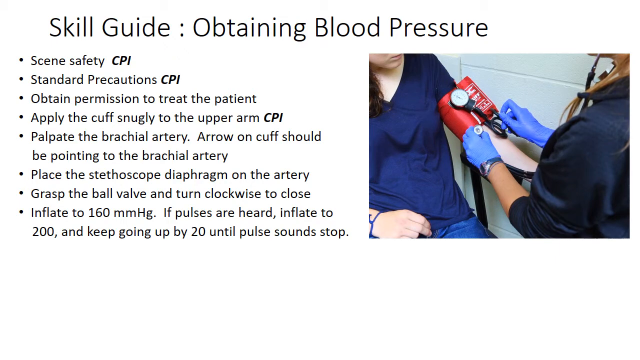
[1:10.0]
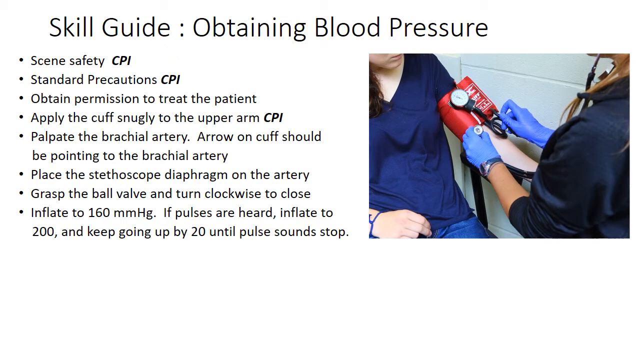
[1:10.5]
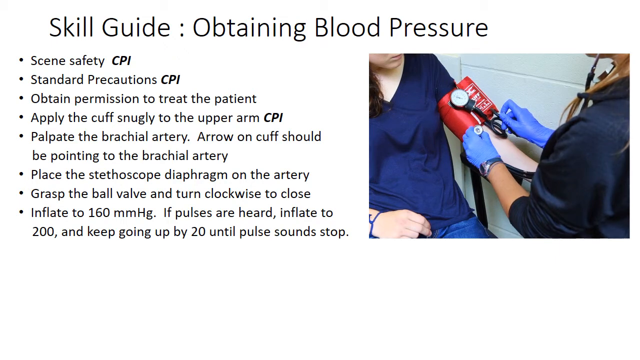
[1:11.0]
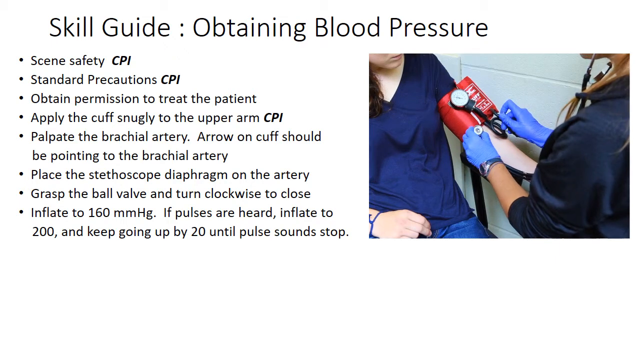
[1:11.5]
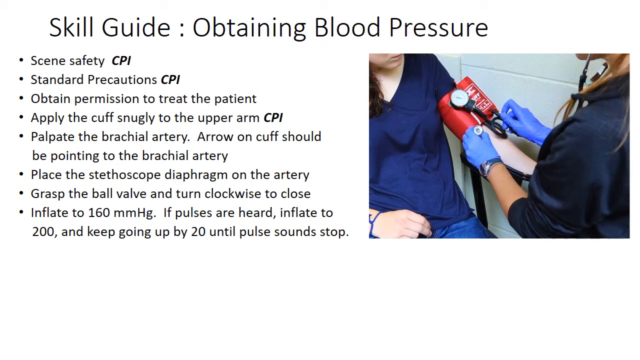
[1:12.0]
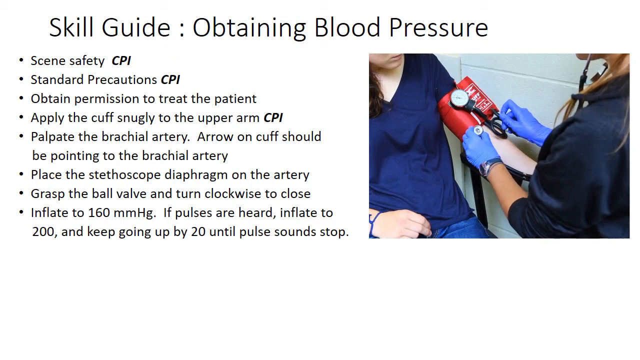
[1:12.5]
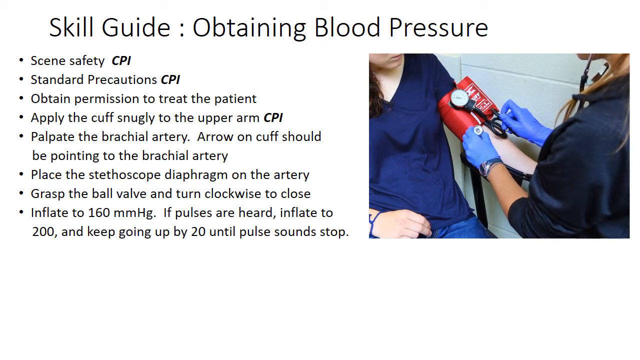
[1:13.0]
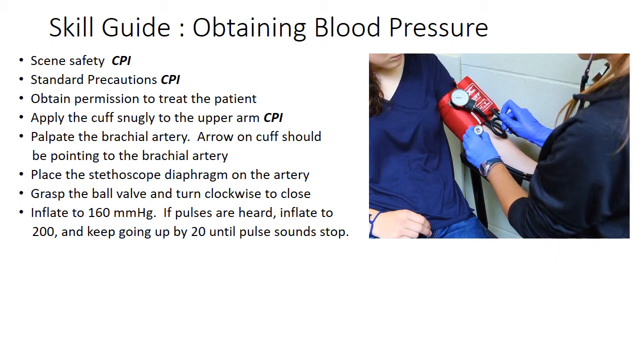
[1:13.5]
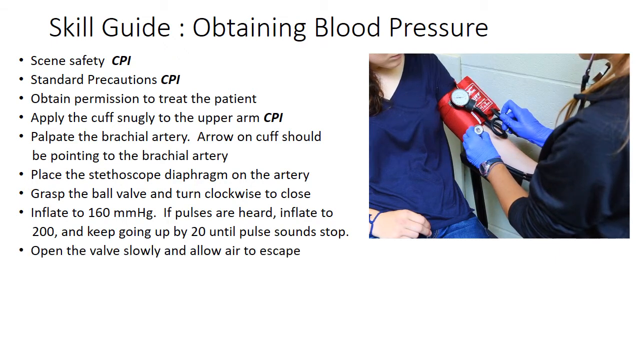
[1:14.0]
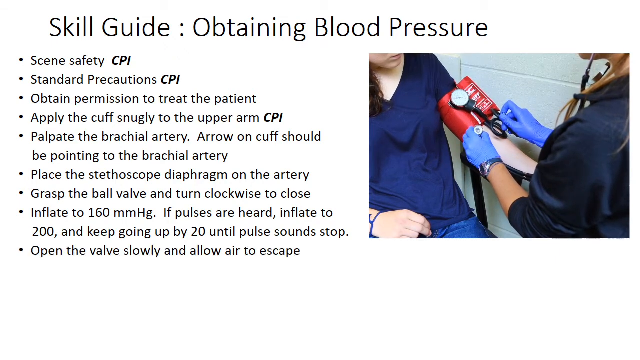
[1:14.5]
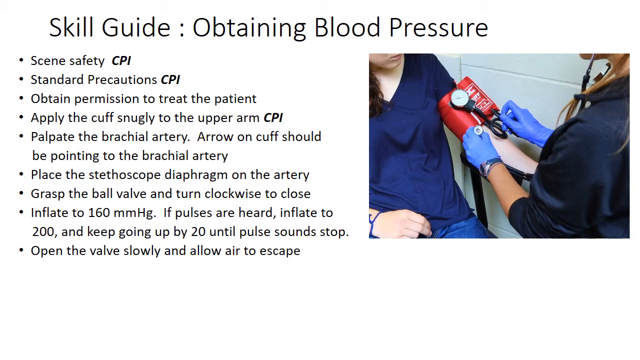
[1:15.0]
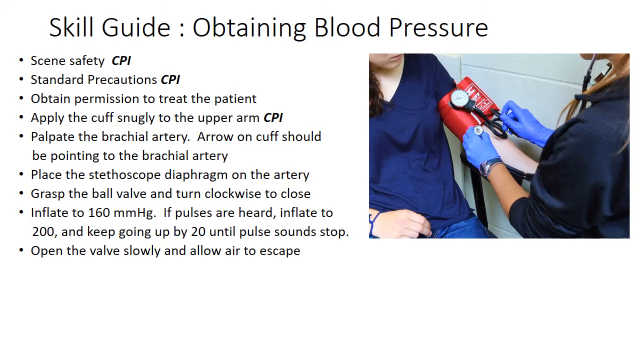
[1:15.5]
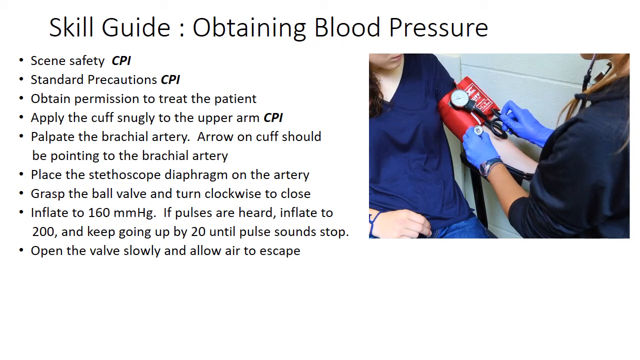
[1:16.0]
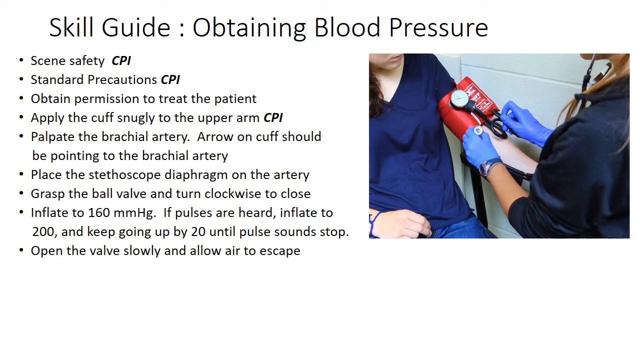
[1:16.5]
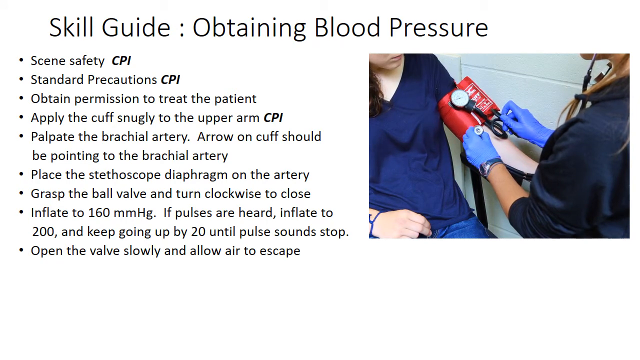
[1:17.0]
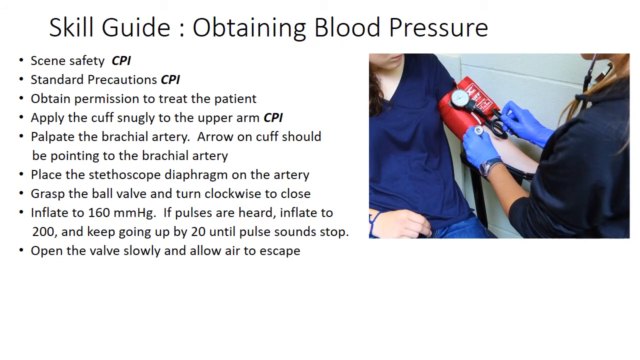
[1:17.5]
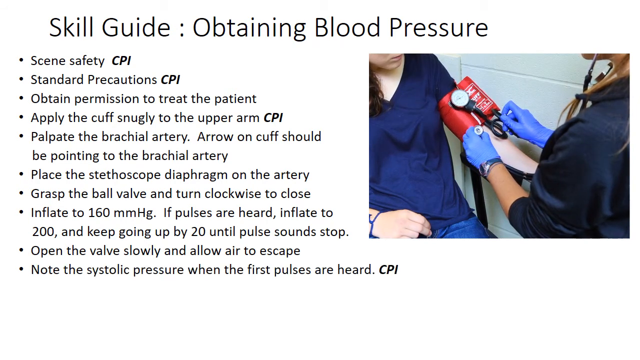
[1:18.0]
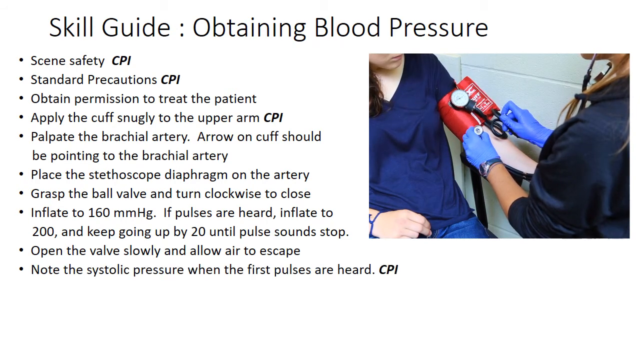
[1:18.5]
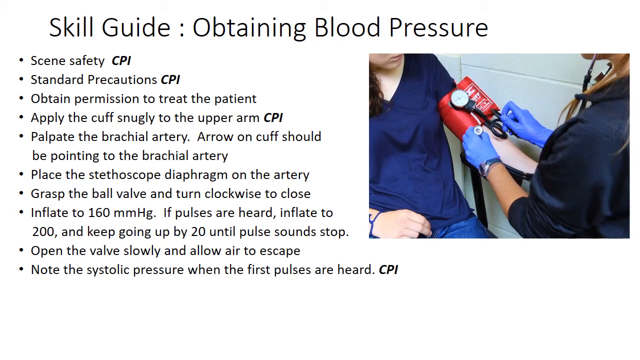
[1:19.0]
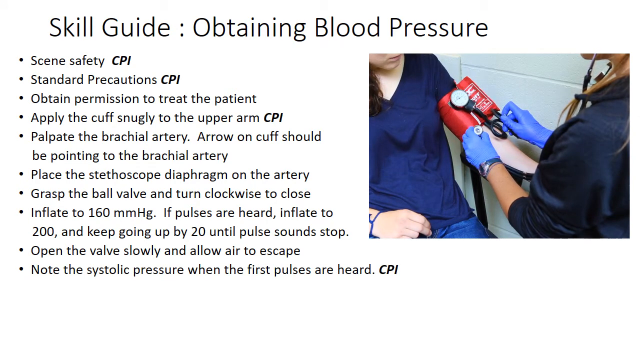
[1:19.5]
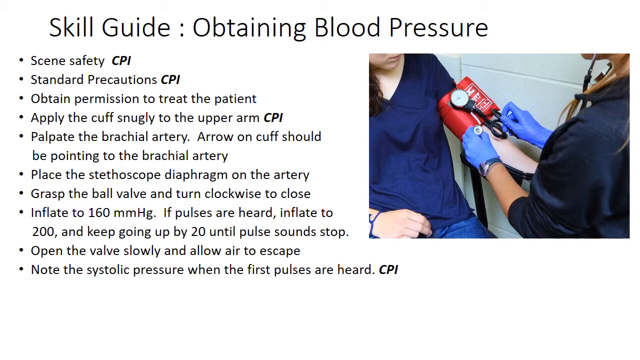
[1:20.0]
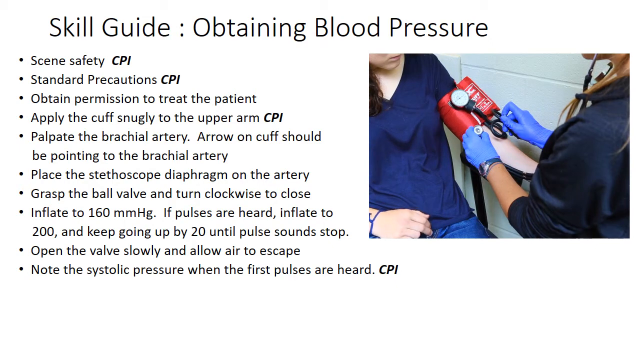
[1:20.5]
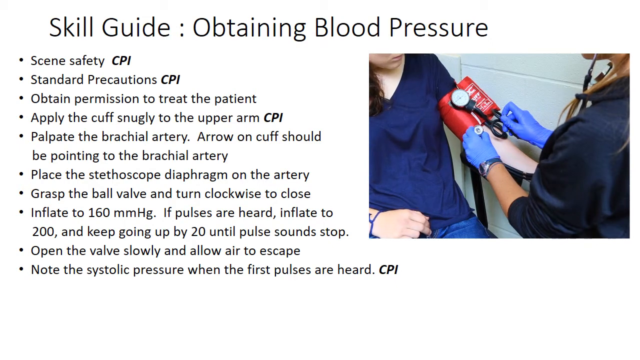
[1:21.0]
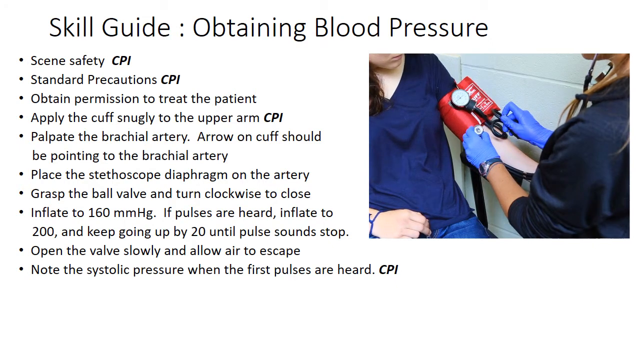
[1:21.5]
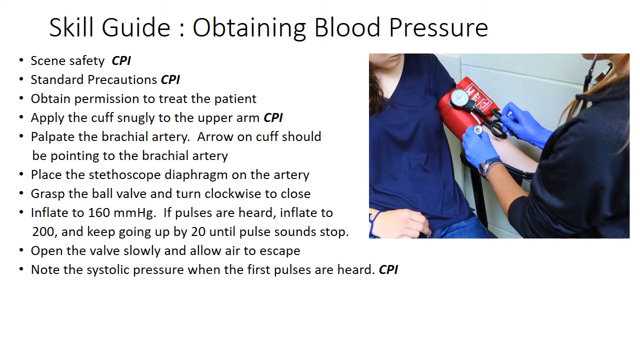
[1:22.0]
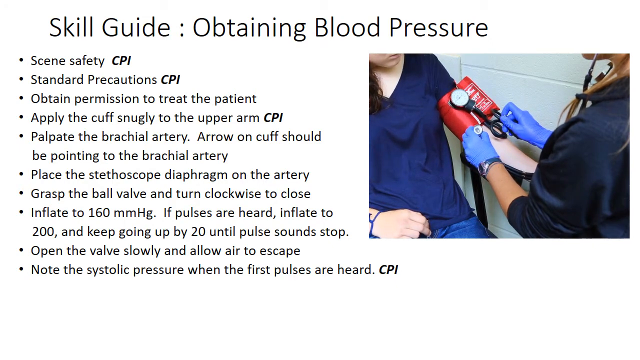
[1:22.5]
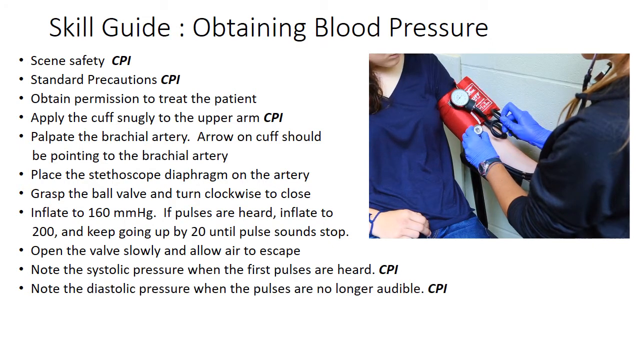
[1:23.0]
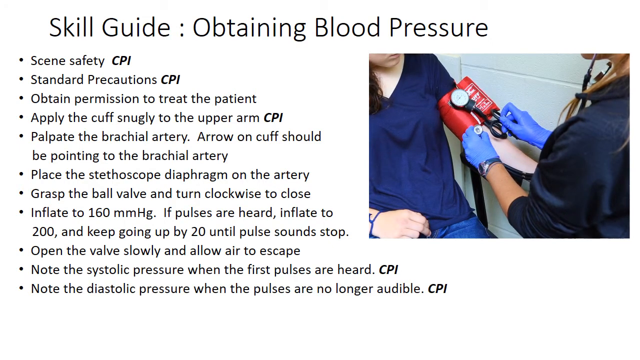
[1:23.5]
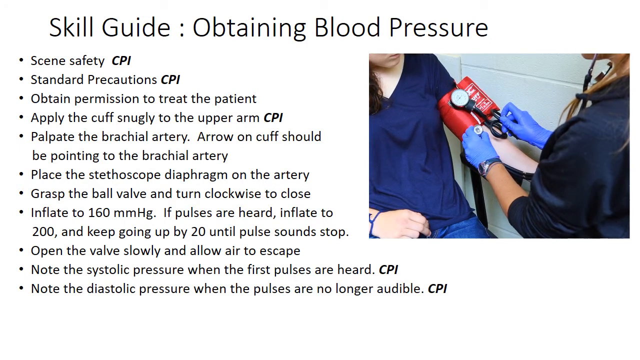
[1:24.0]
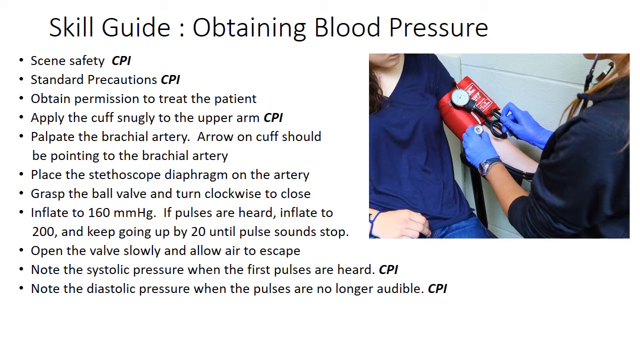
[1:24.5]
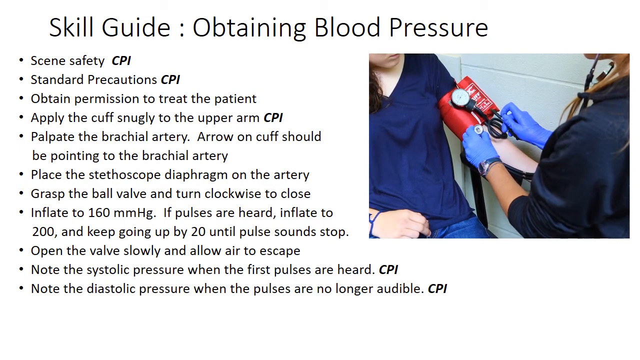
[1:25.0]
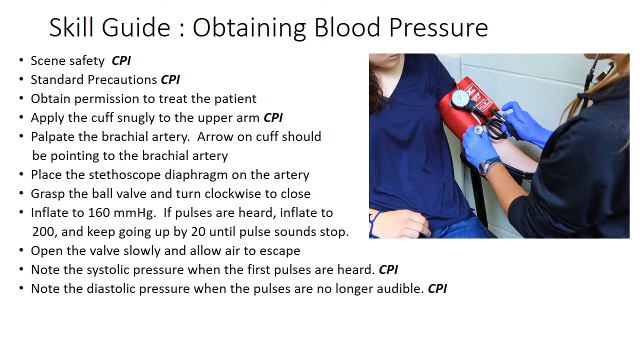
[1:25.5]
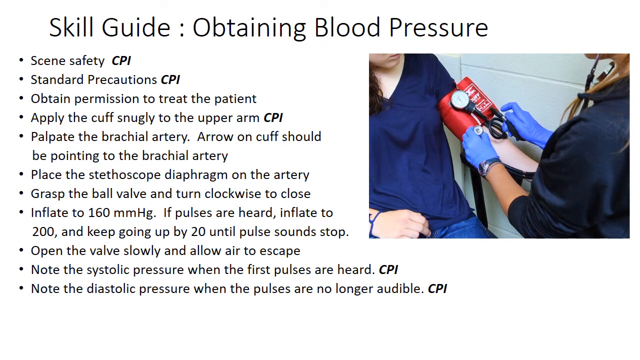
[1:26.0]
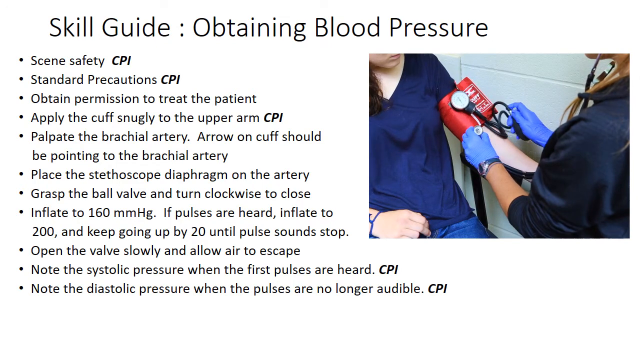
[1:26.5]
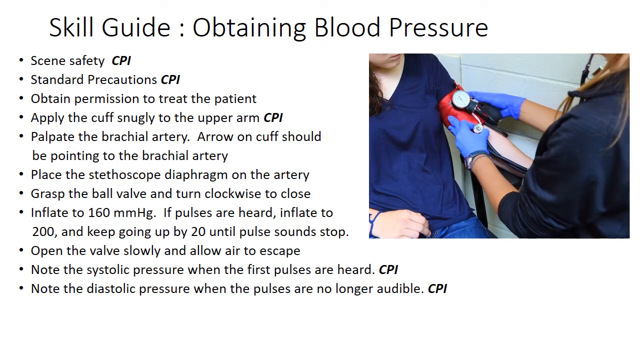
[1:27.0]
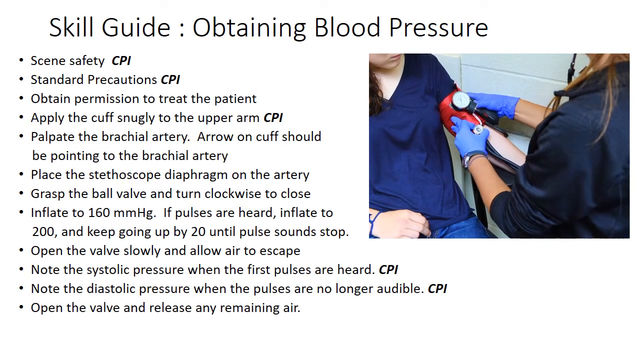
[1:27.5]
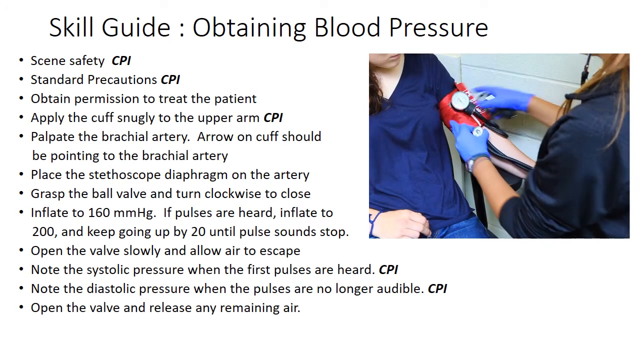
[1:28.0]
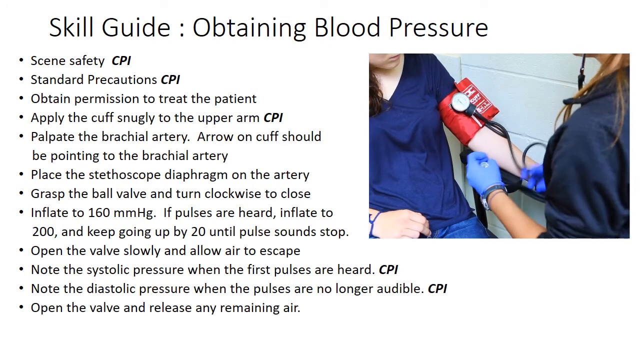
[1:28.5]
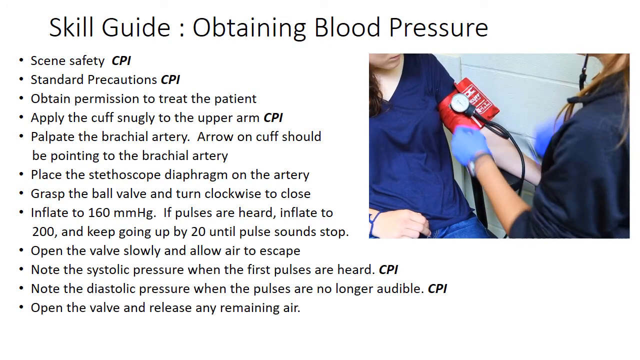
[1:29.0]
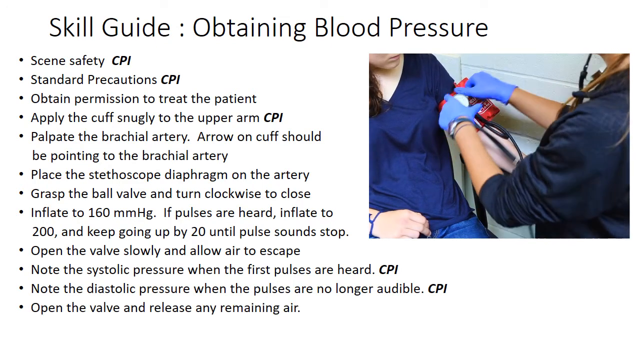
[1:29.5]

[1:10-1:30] A text title reads "skill guide obtaining blood pressure," with bullet points at the top left of the screen: "scene safety CPI," "standard precaution CPI," "obtain permission to treat the patient," "apply the cuff snugly to the upper arm CPI," "palpate the brachial artery," "arrow on cuff should be pointing to the brachial artery," "place the stethoscope diaphragm on the artery," "grasp the ball valve and turn clockwise to close," "inflate to 160 mmHg. If pulses are heard, inflate to 200 and keep going up by 20 until pulse sounds stop." In the top right of the video, a person is seated in a black chair, wearing a navy blue V-neck t-shirt and jeans. Their arm is extended on the chair arm, with a red blood pressure cuff wrapped around the top of the left arm. A person across from the seated person has a stethoscope in their ears and latex-gloved hands to the left and right of the person's upper arm. The bullet points then continue: "open the valve slowly and allow air to escape," "note the systolic pressure when the first pulses are heard, CPI," "note the diastolic pressure when the pulses are no longer audible, CPI" and "open the valve and release any remaining air."